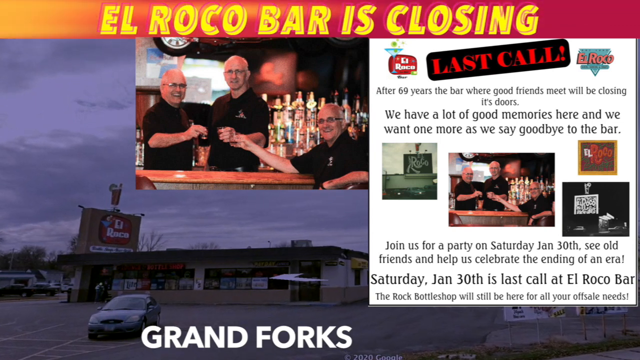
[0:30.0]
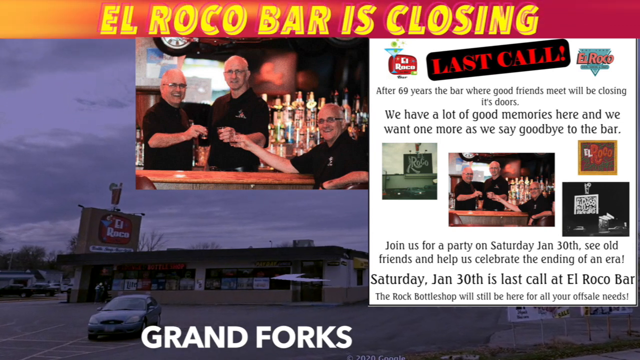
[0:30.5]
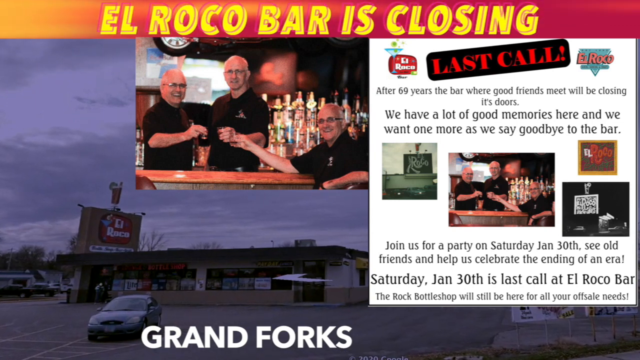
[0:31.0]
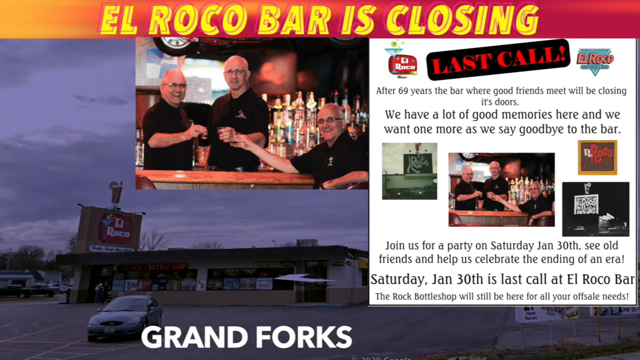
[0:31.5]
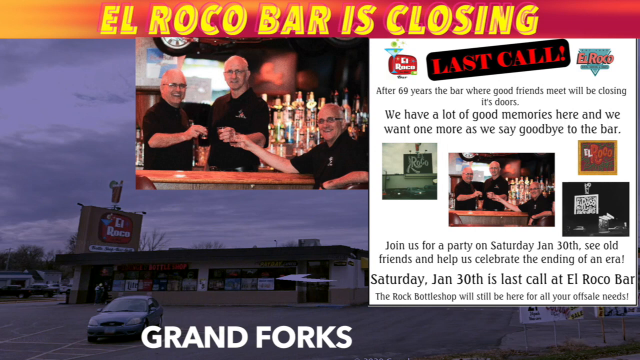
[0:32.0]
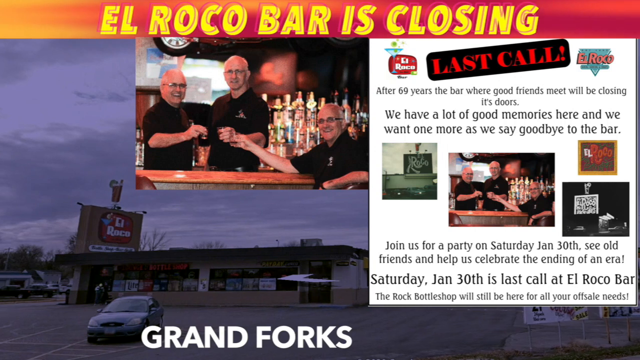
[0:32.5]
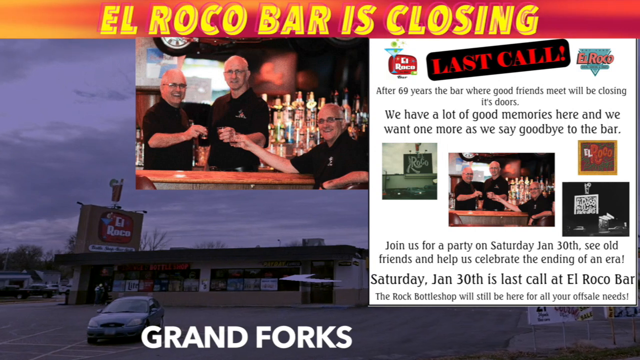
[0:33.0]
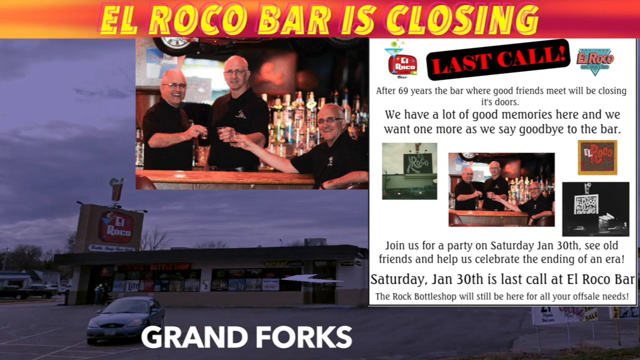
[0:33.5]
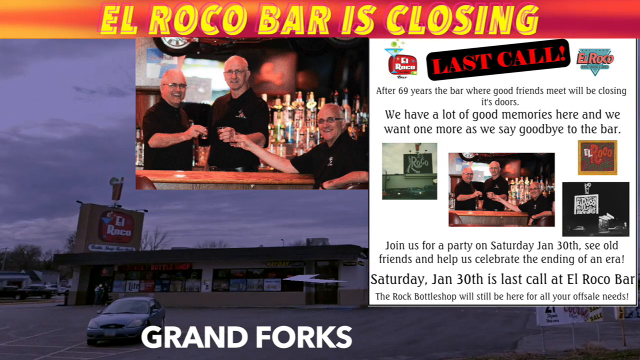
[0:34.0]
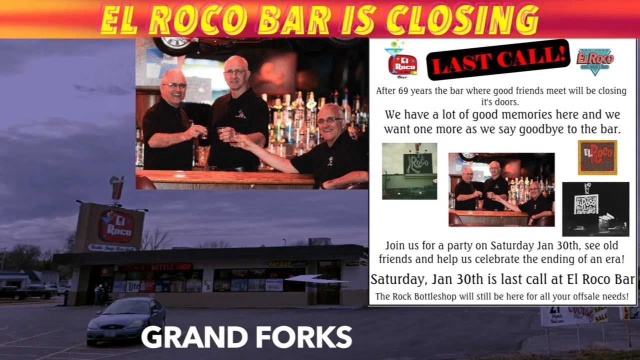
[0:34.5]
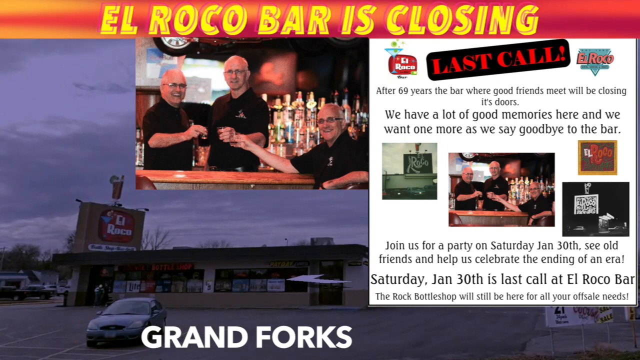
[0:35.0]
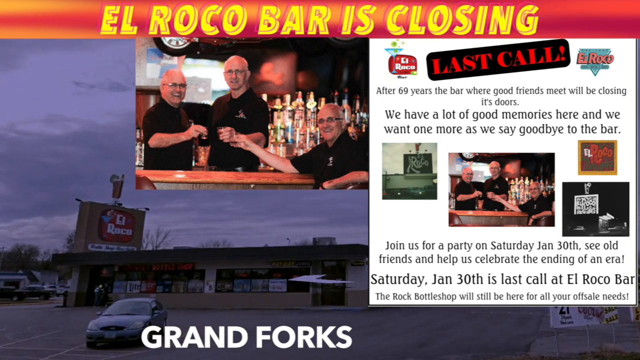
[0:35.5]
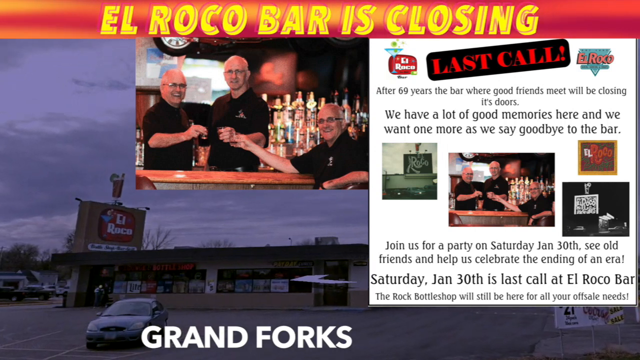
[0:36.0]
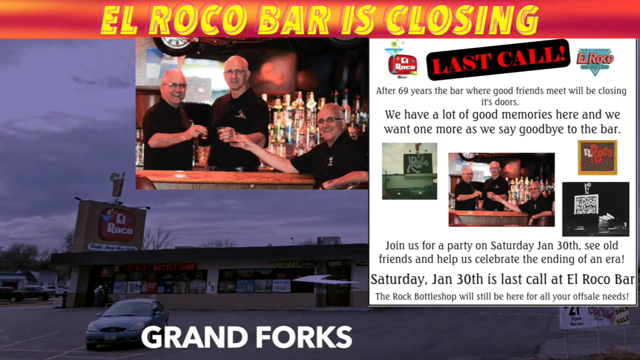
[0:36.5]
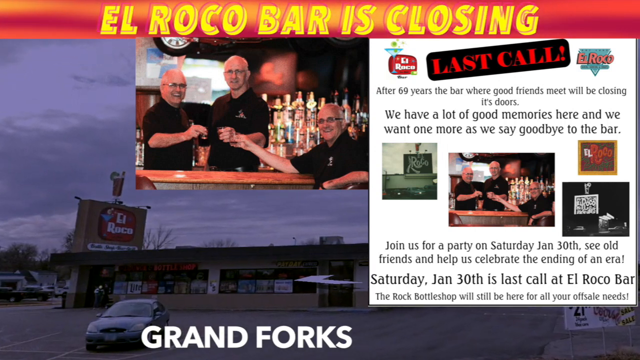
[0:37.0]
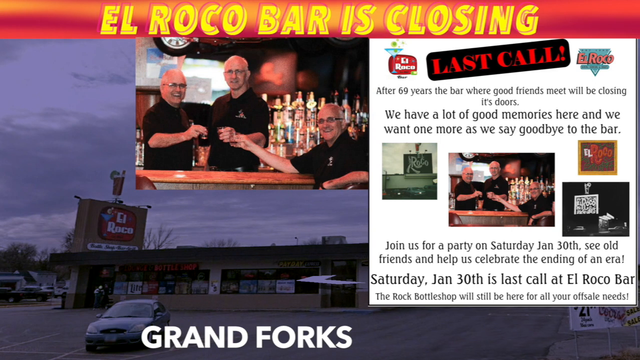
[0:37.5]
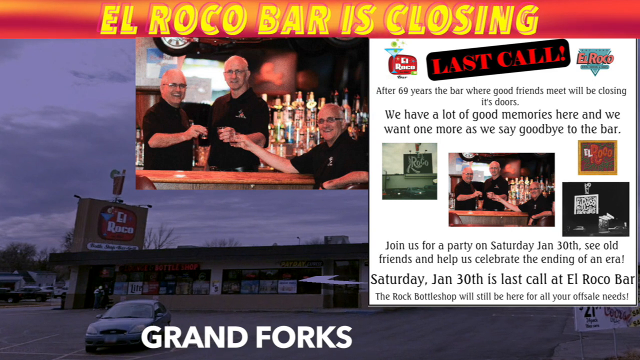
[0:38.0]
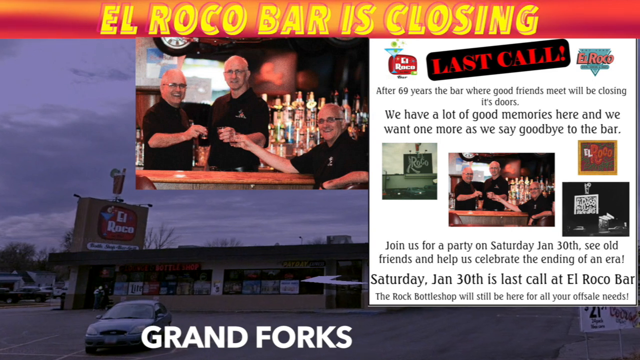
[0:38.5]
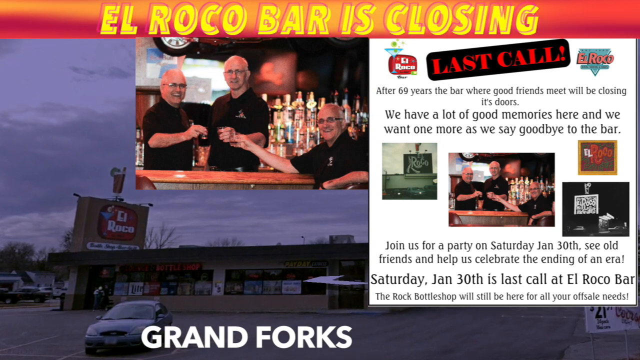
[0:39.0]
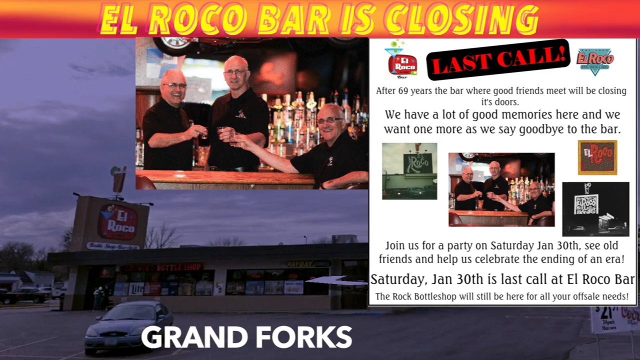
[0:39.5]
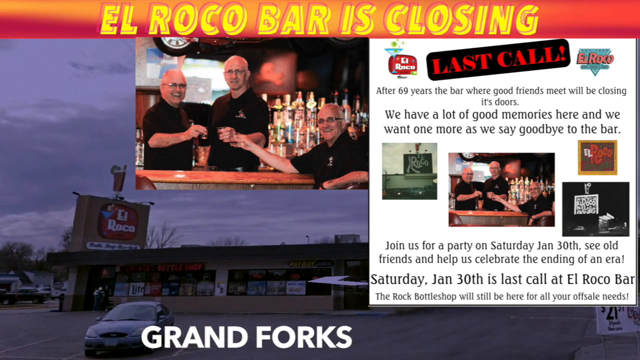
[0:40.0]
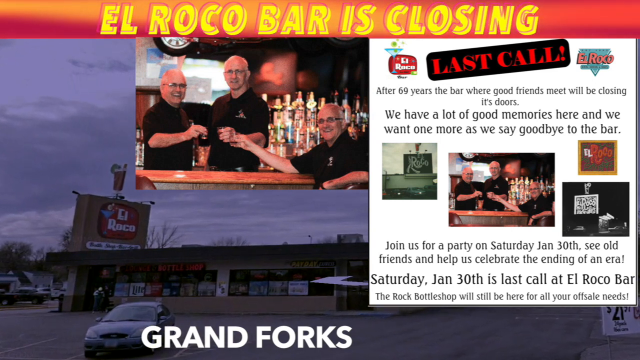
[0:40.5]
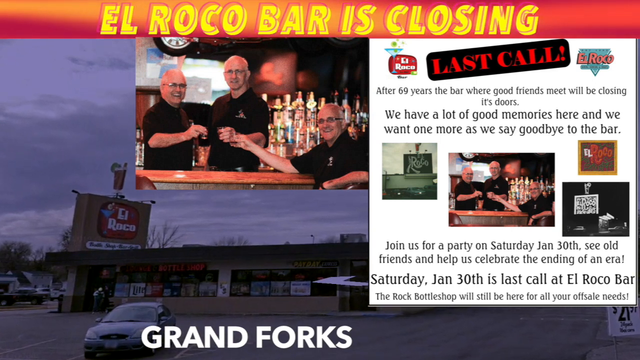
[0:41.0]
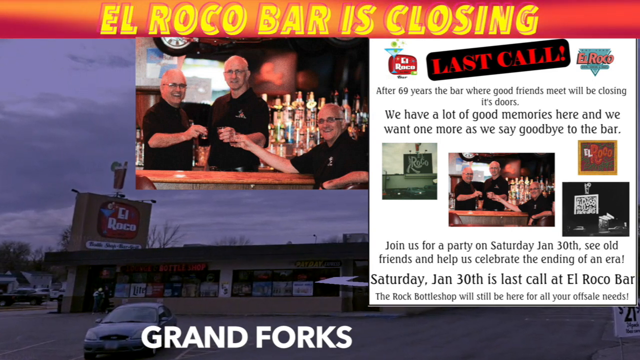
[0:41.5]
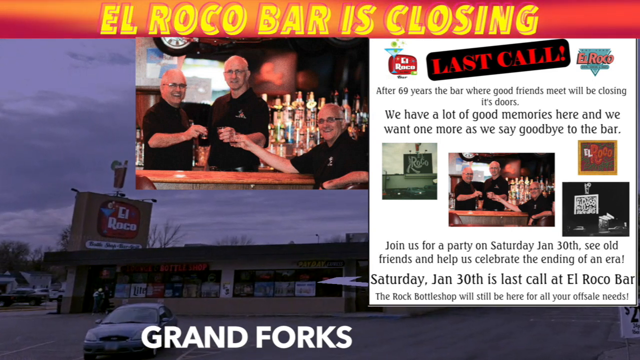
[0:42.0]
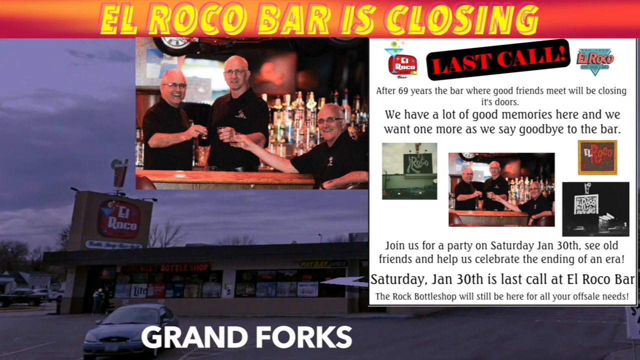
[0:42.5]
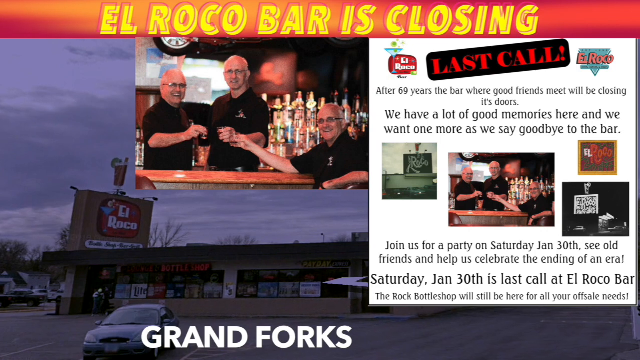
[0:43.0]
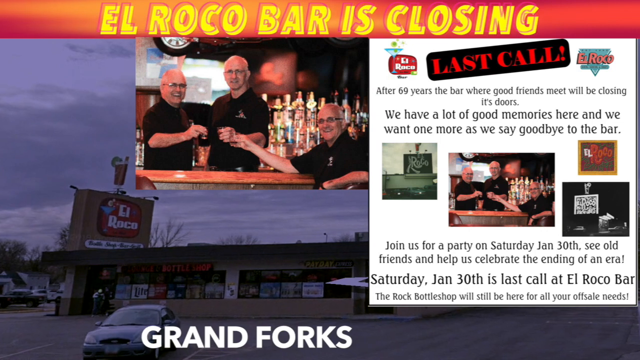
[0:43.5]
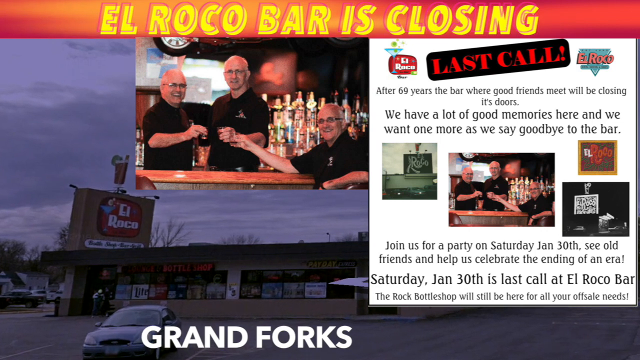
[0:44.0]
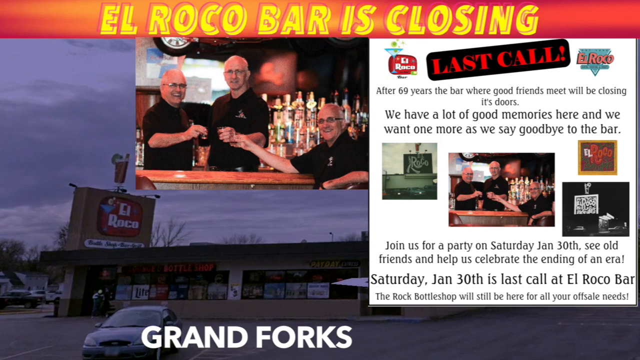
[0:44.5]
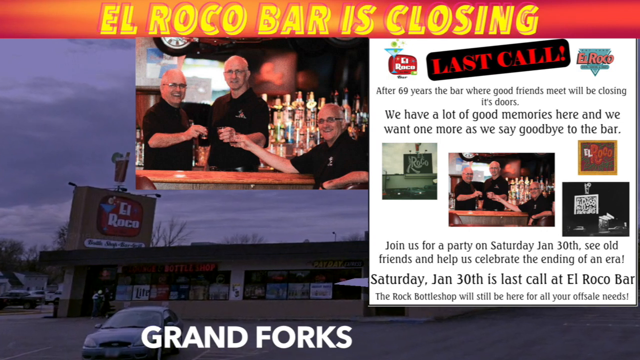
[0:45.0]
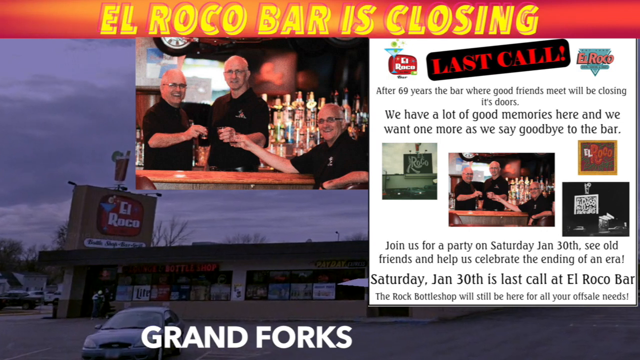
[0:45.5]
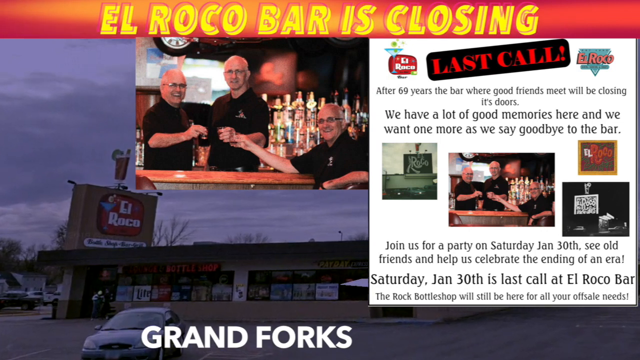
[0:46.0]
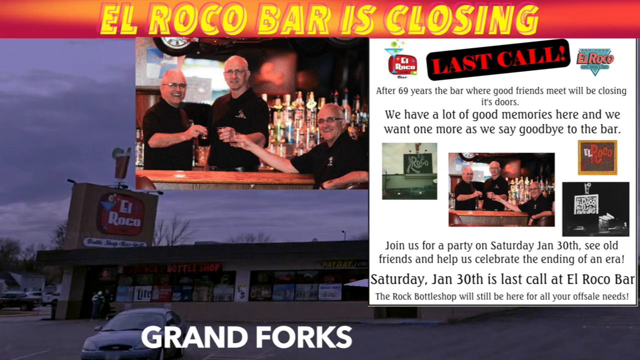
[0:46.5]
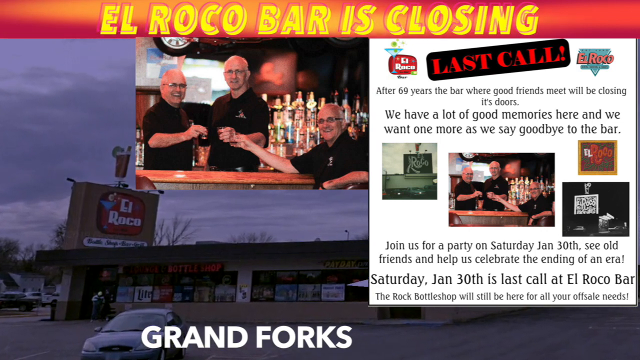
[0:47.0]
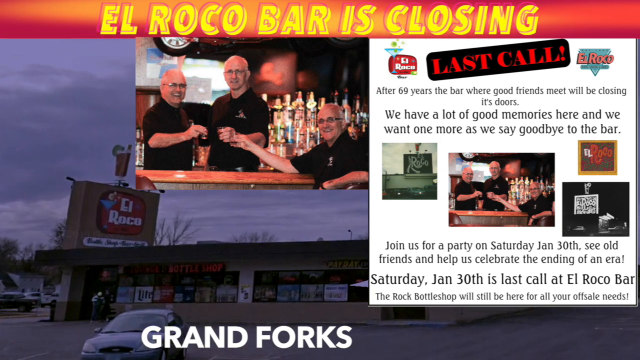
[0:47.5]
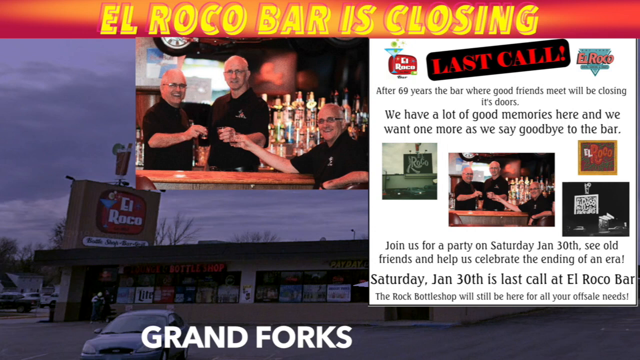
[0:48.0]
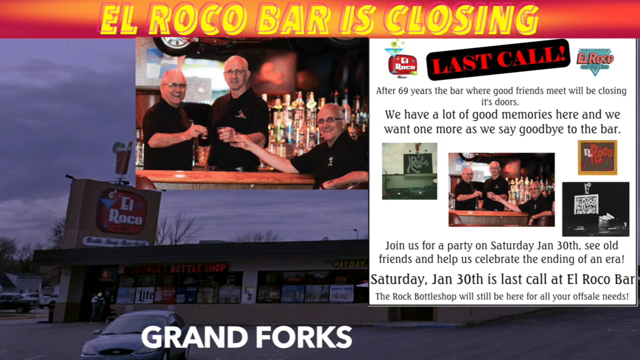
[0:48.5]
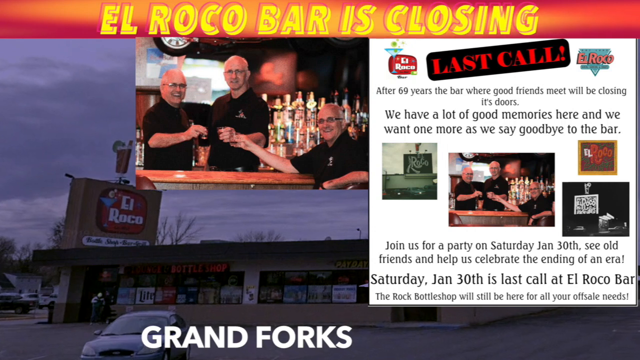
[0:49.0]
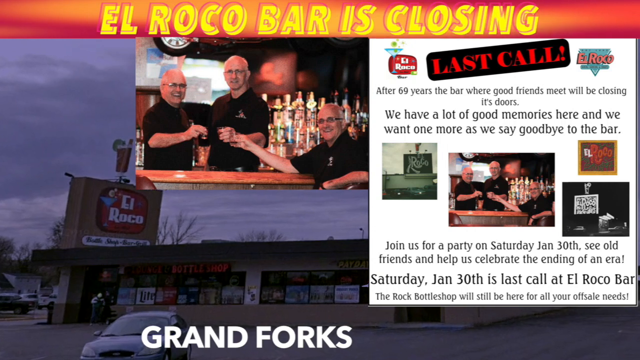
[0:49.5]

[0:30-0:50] Text reads "El Rocco Bar is closing." The location is Grand Forks, viewed through Google Maps or Google Earth. A flyer reads: "Last call. After 69 years, the bar where good friends meet will be closing its doors. We have a lot of good memories here and we want one more as we say goodbye to the bar. Join us for a party on Saturday, January 30th. See old friends and help us celebrate the end of the era. Saturday, January 30th is the last call at El Rocco Bar. The Rock Bottle Shop will still be here for all your off-sale needs." A picture shows what looks like three people, possibly owners of the bar.